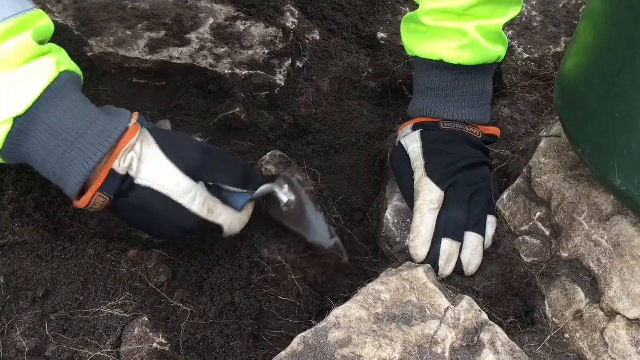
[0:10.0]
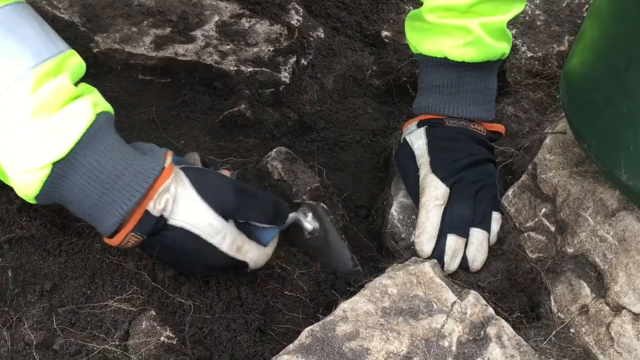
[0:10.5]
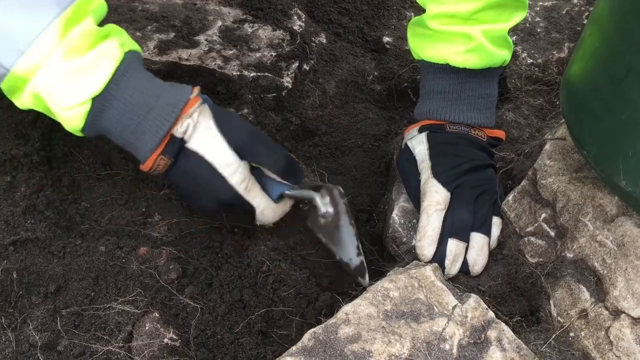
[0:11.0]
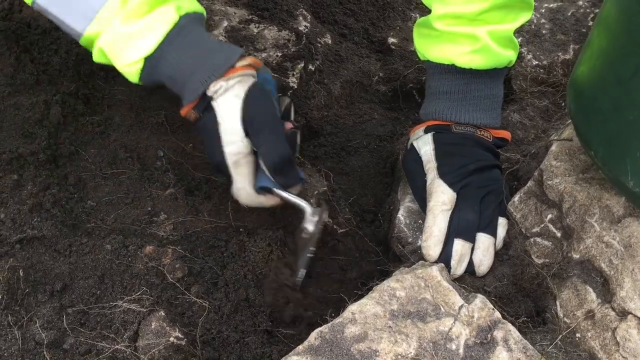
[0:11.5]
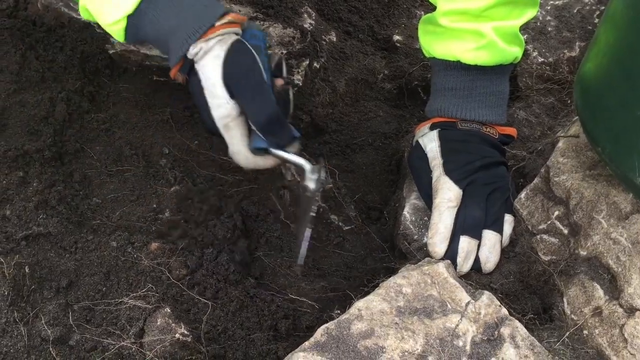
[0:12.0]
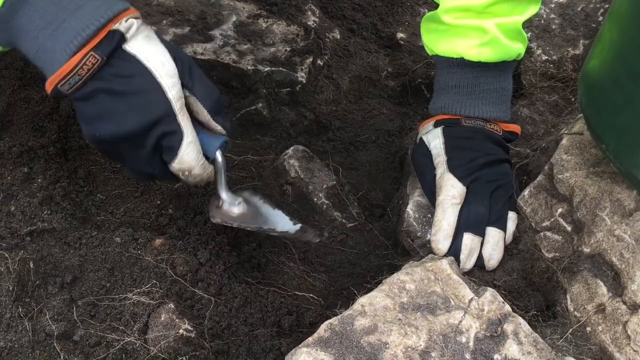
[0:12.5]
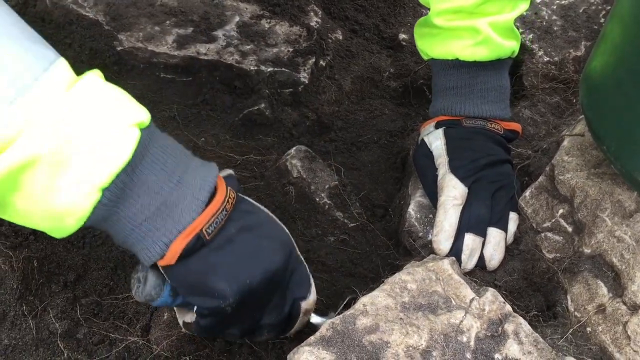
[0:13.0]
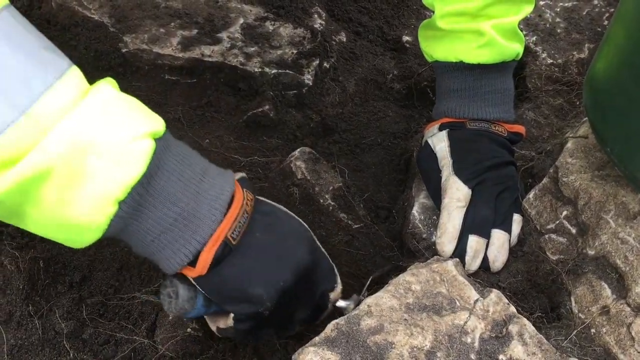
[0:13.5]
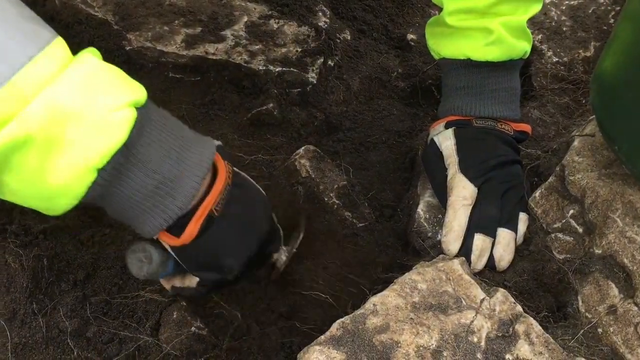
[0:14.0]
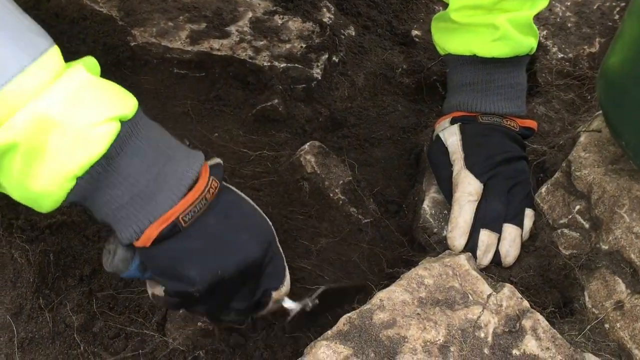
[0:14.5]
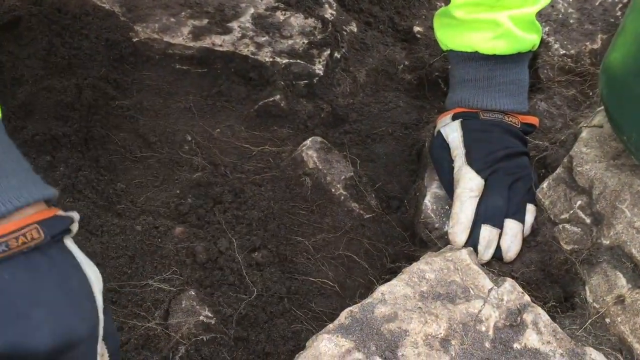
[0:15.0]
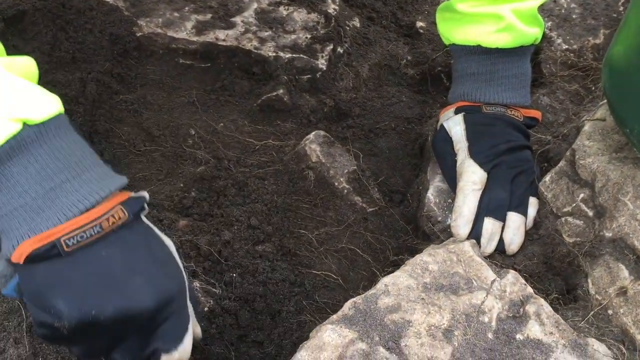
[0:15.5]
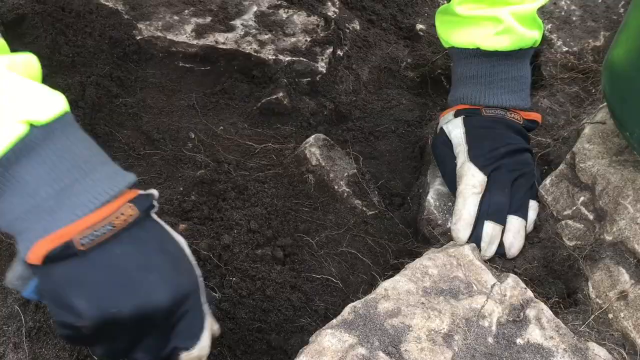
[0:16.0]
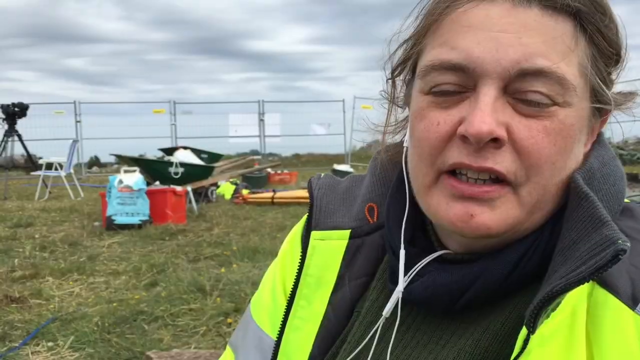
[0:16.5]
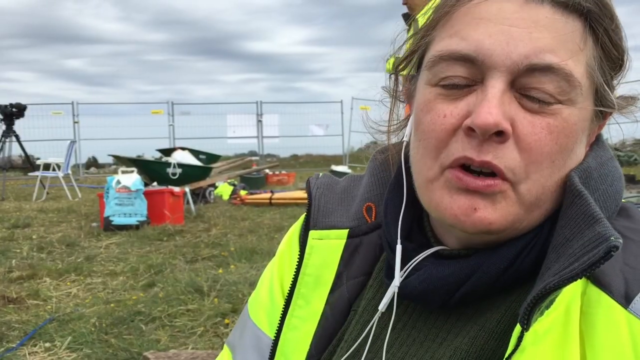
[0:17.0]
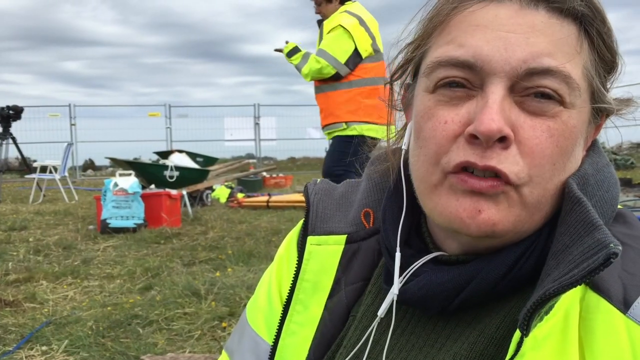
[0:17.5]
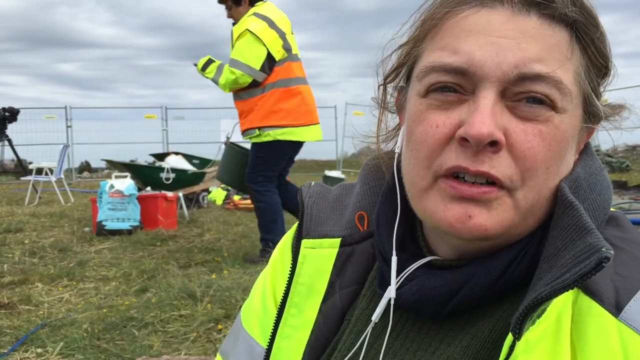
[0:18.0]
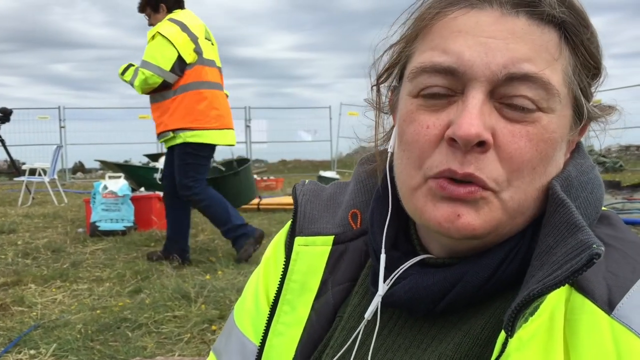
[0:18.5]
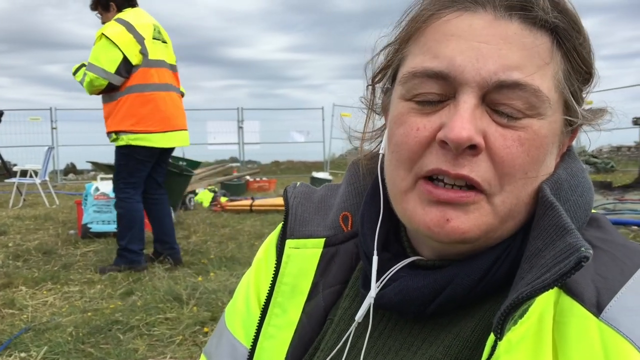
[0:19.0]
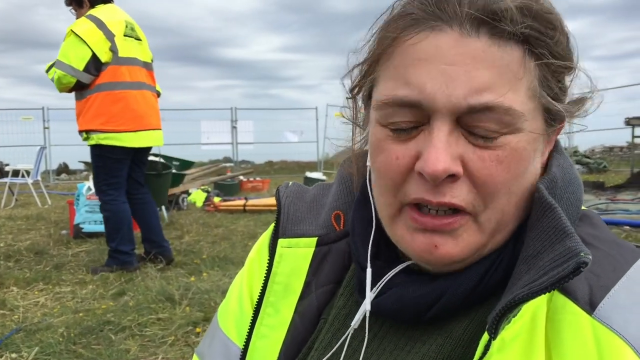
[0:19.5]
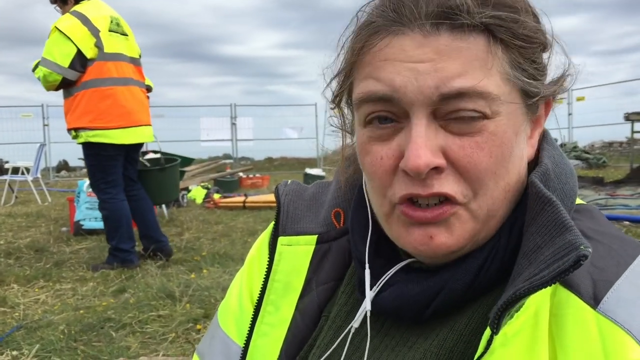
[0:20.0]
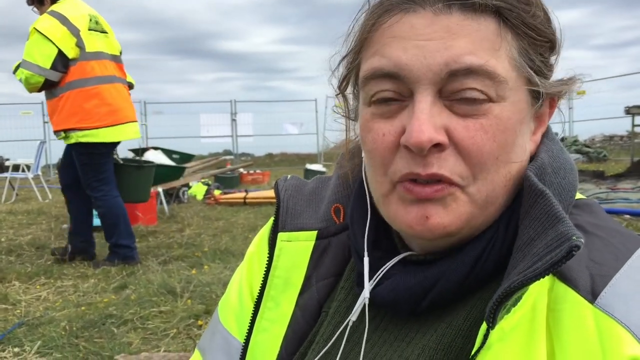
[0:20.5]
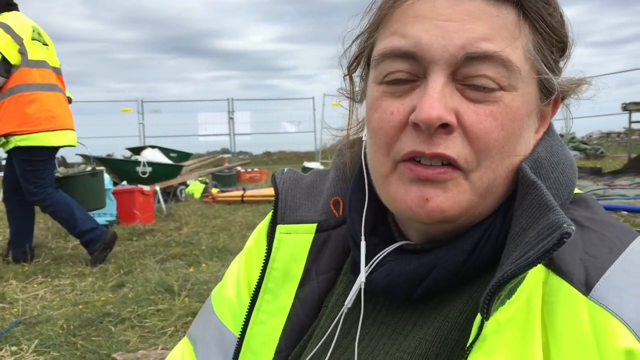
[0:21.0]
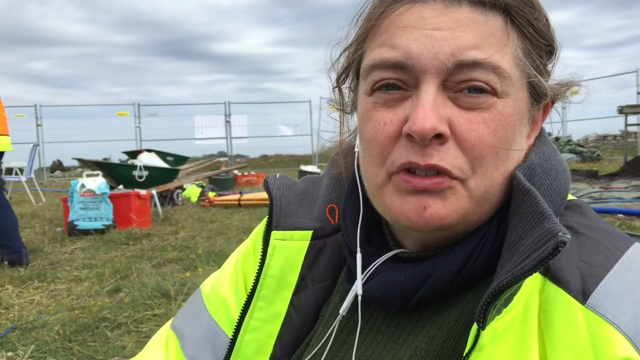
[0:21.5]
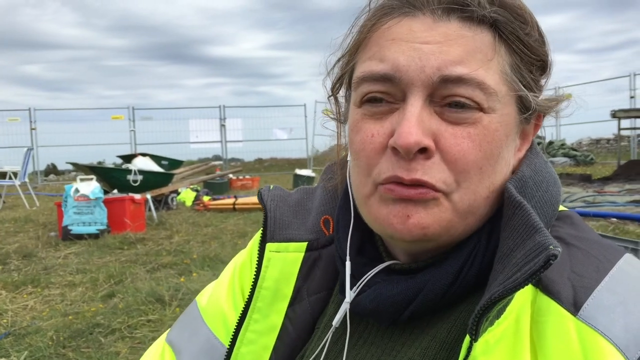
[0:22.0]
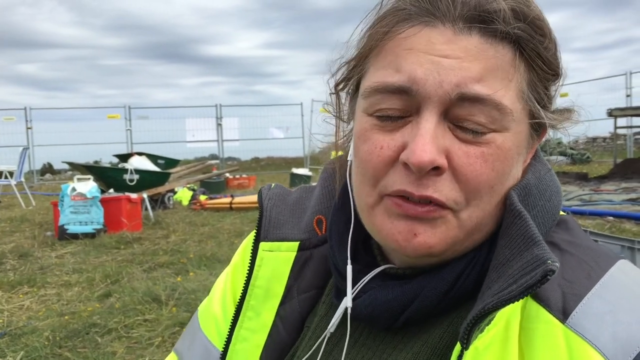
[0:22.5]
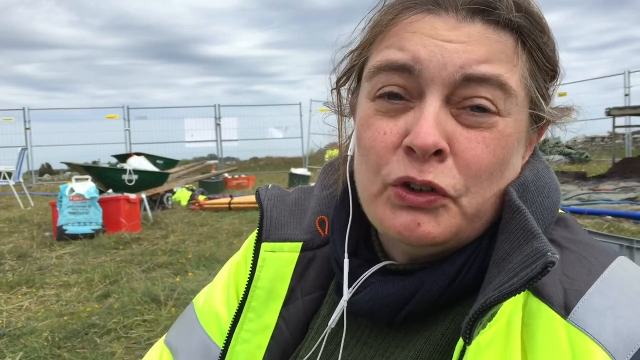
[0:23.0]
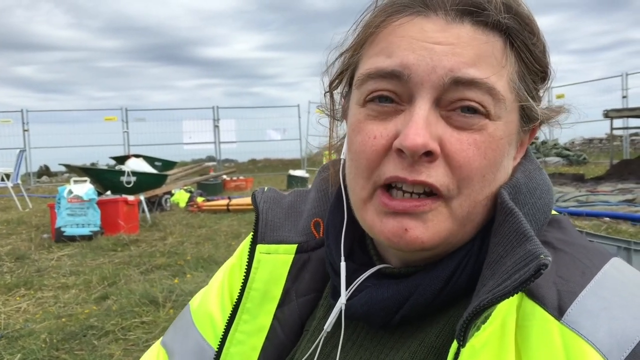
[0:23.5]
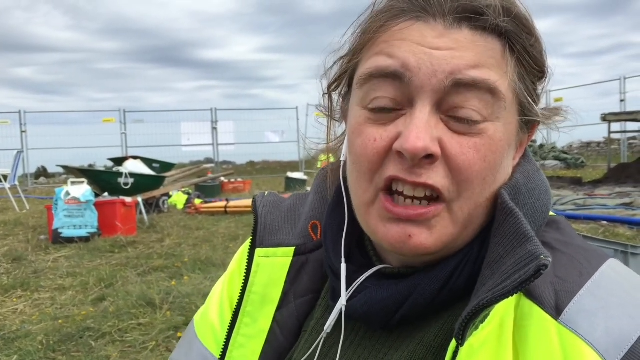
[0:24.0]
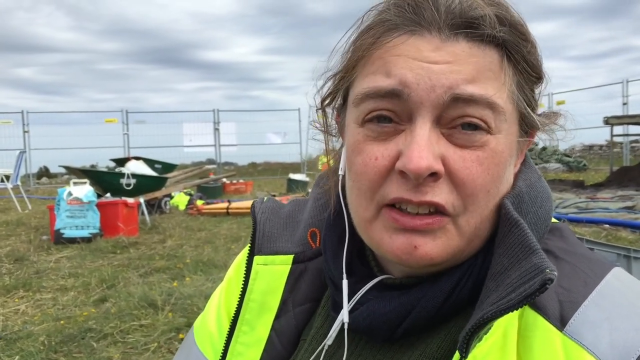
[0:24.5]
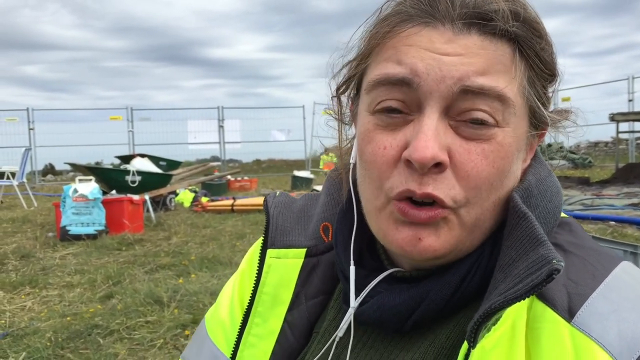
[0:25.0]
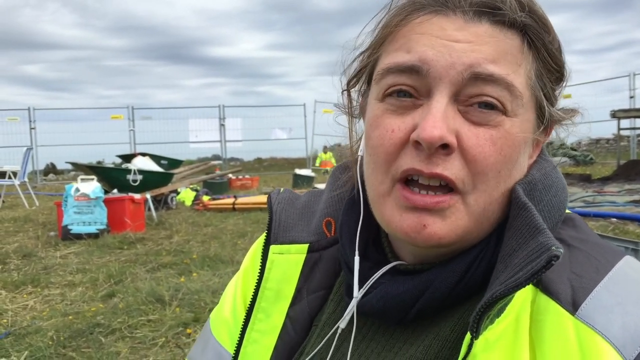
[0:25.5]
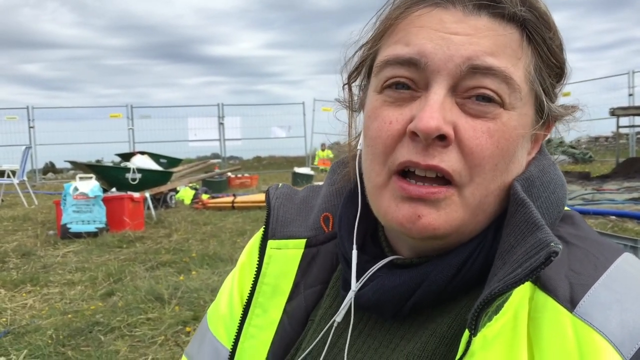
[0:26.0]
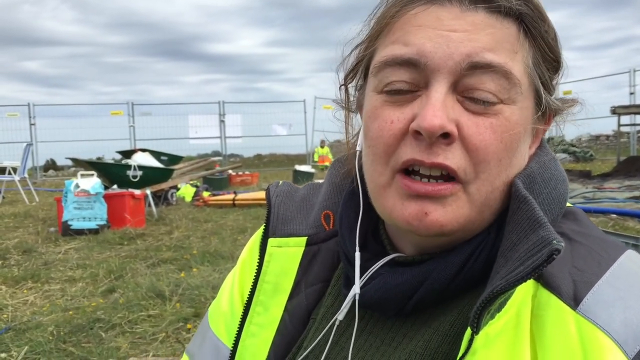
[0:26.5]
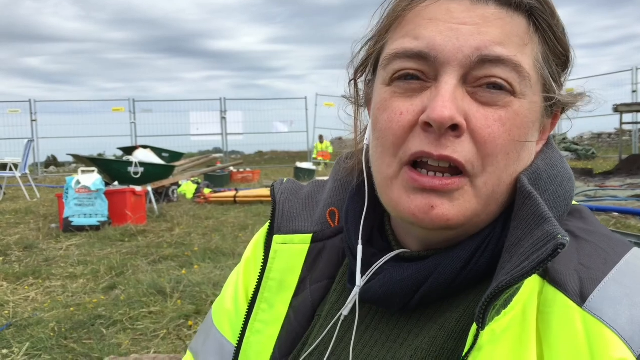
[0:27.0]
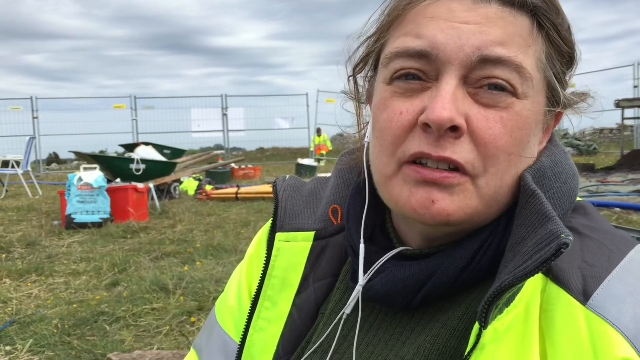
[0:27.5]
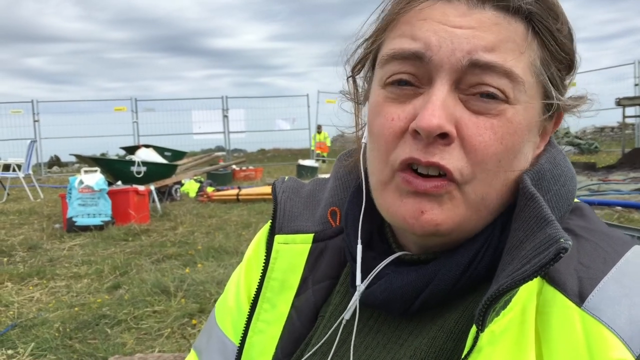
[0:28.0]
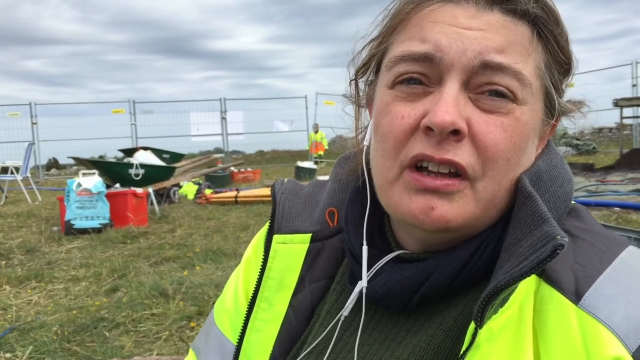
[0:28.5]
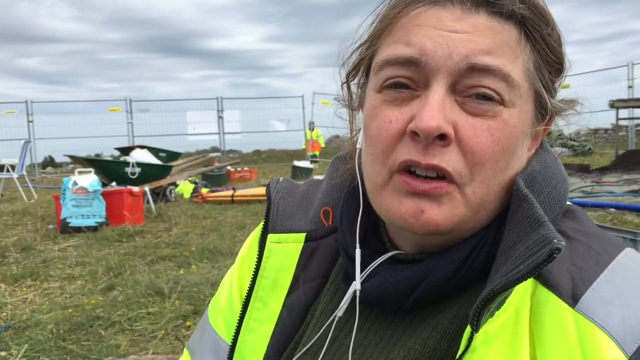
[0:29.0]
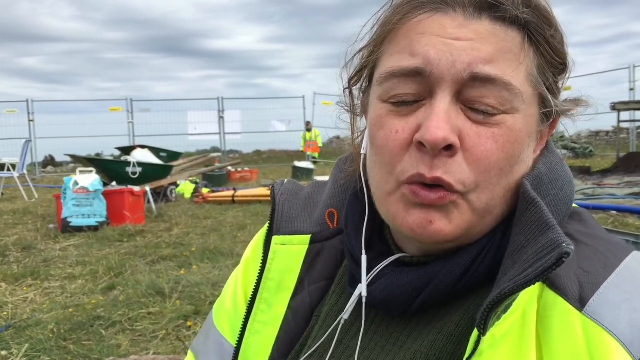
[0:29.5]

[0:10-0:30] Someone's hands are shown wearing white and black gloves; the person also has a luminous jacket on. They use a trowel to dig slowly in the mud, where rocks and plant roots are visible, and he slowly moves the dirt away from where he is trying to dig. Then a woman speaks directly to the camera for some time. She also wears a luminous jacket and has an earphone in her ear. Behind her are a wheelbarrow and a chair. Someone else walks across the background holding a bucket, and someone on the other side of the fences walks towards the field. Three people appear clearly.